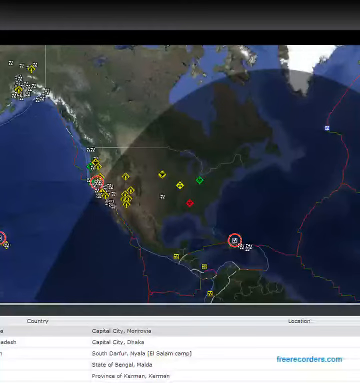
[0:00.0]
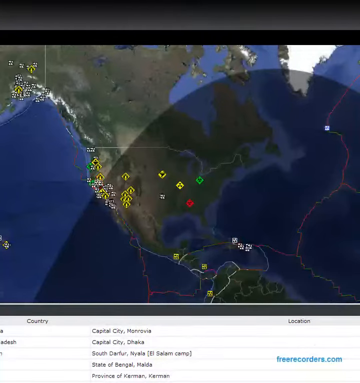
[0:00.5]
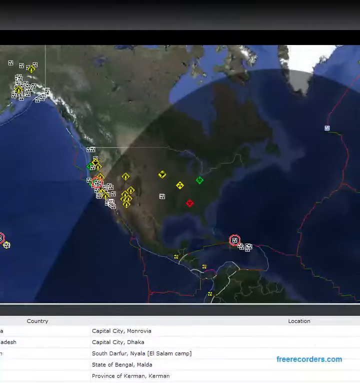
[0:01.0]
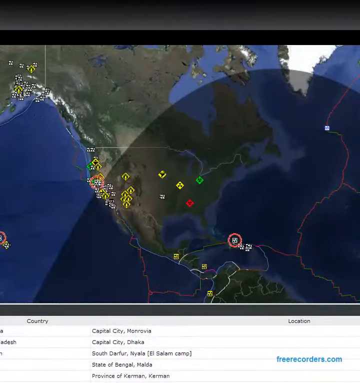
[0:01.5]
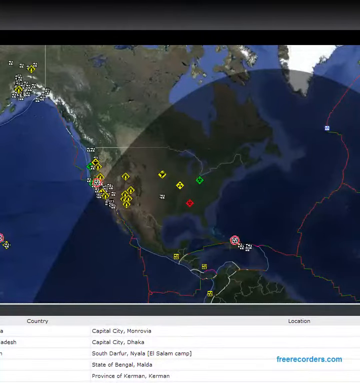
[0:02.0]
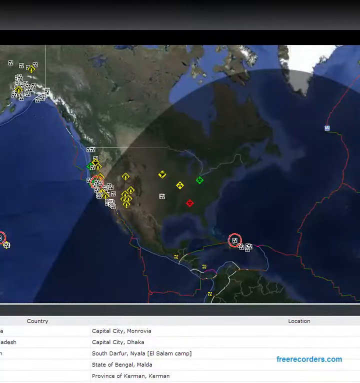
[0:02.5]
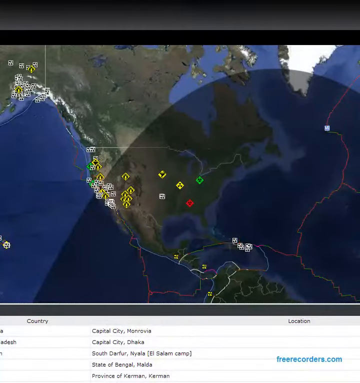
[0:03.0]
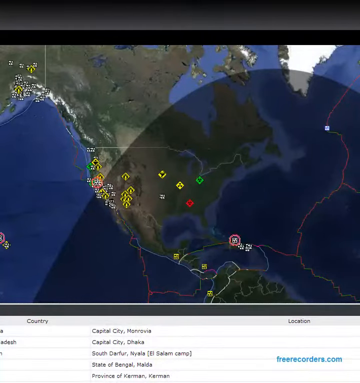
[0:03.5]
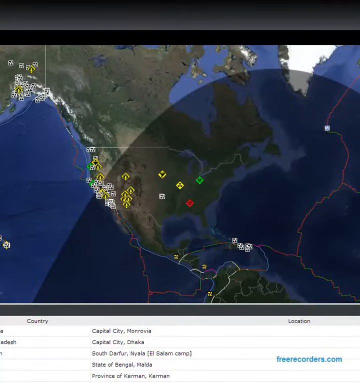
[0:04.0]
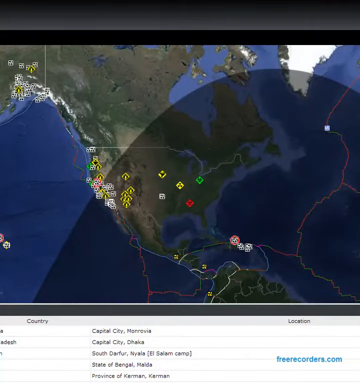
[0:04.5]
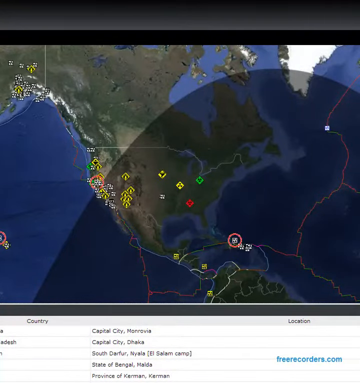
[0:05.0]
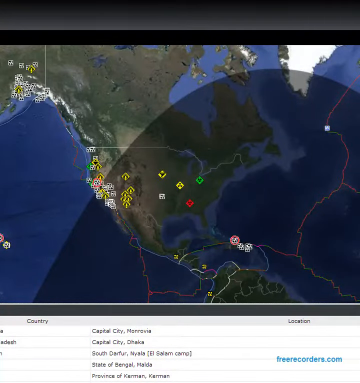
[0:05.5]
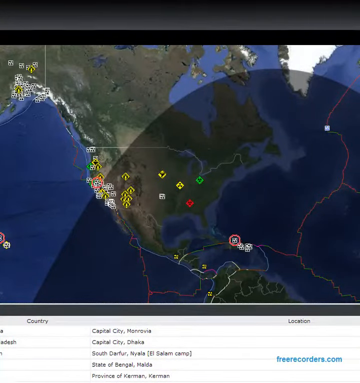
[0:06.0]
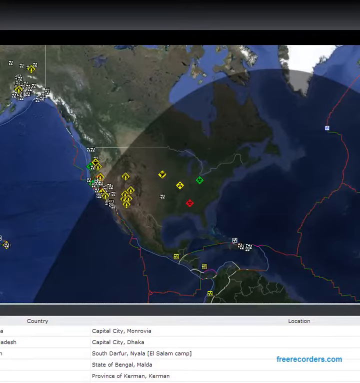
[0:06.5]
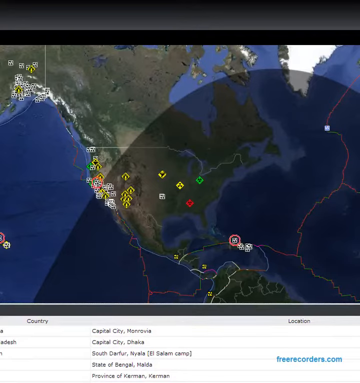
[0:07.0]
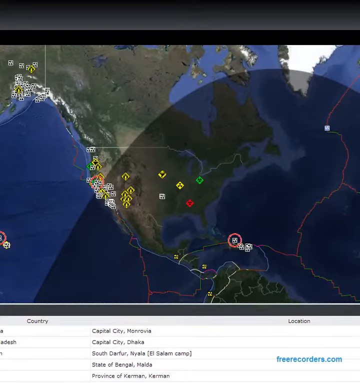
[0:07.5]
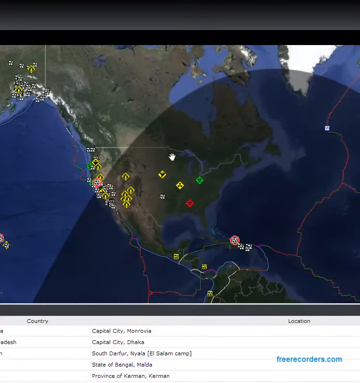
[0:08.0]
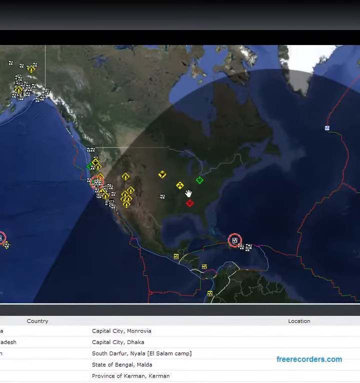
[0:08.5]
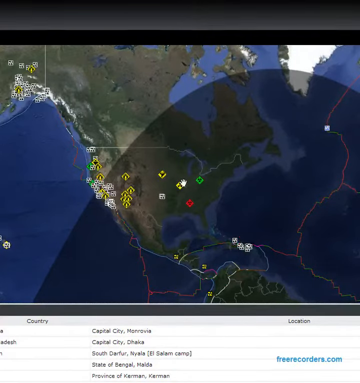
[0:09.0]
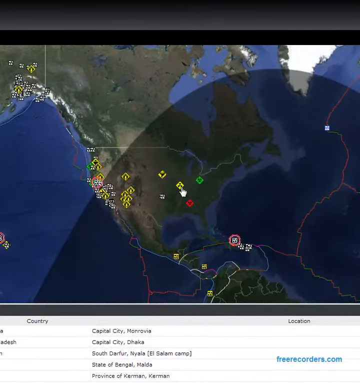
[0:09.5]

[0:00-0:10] A radar from a satellite shows the continent of North America. Lines in the ocean separate some spaces, and there are points on the map: a yellow one in the center, a green one that seems to be for a city in Alabama, and a lot of yellow spots at the western point of the USA. These points have circle alarms, with a circle alarm on Hawaii, one at the northern point of California, and one at the northern part of Cuba.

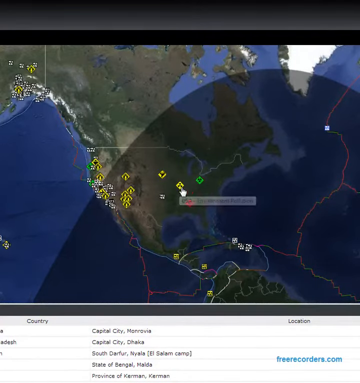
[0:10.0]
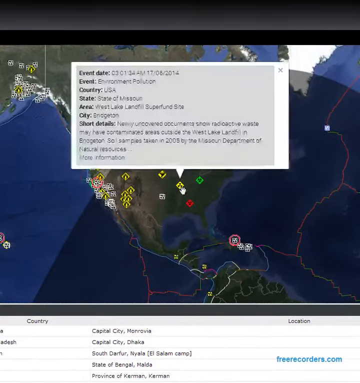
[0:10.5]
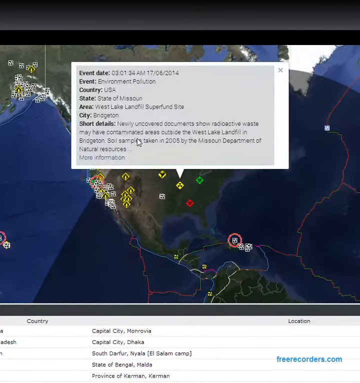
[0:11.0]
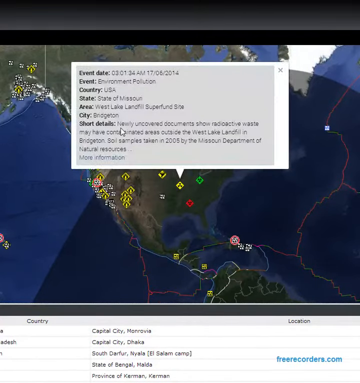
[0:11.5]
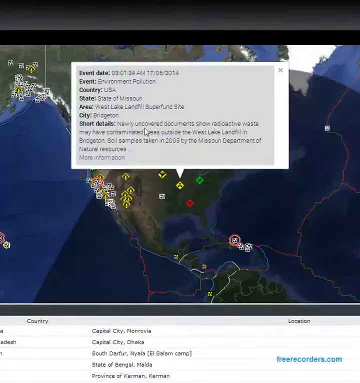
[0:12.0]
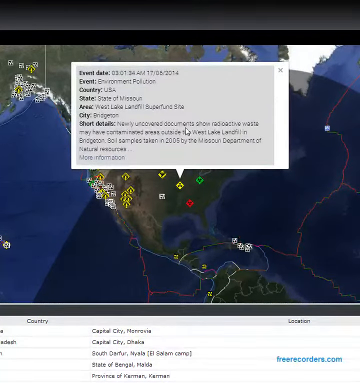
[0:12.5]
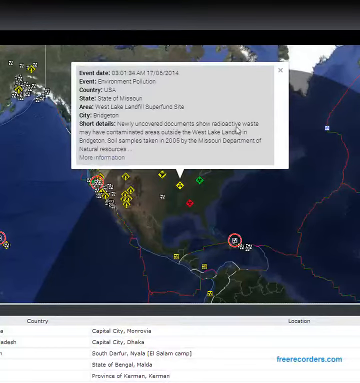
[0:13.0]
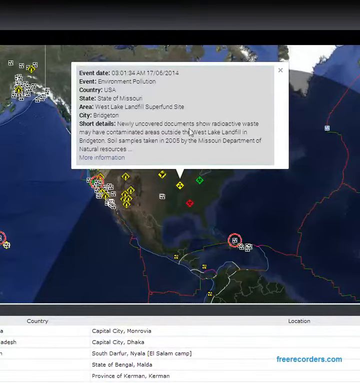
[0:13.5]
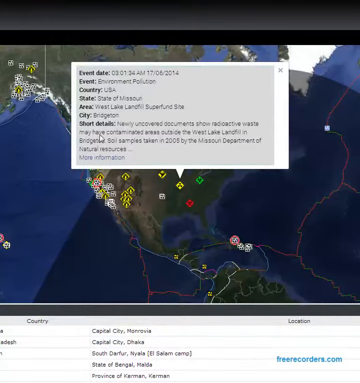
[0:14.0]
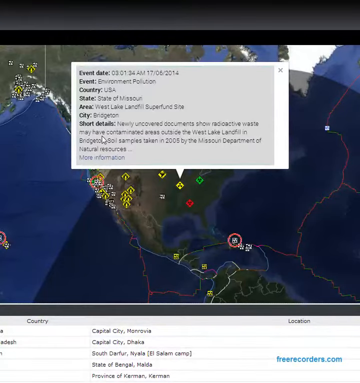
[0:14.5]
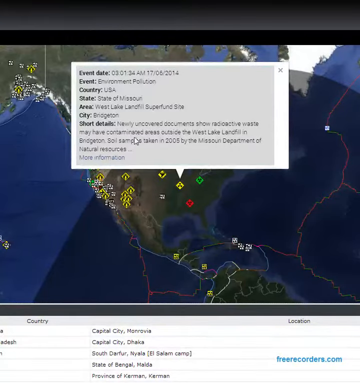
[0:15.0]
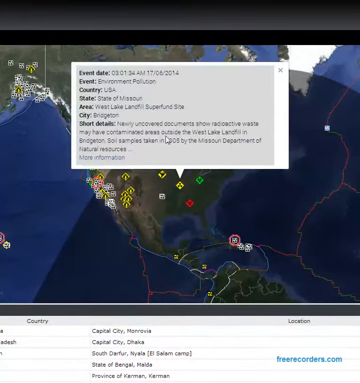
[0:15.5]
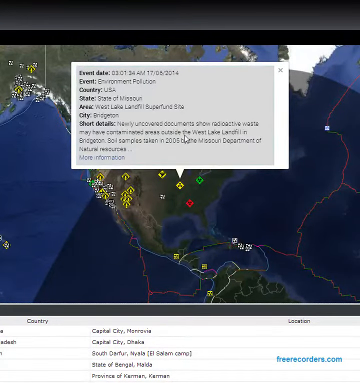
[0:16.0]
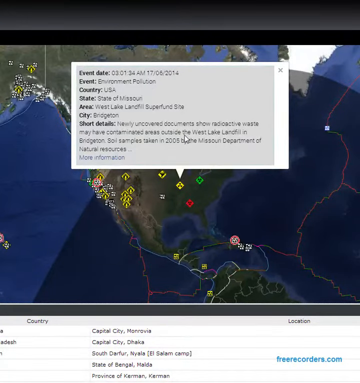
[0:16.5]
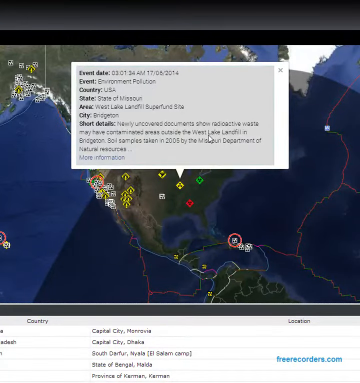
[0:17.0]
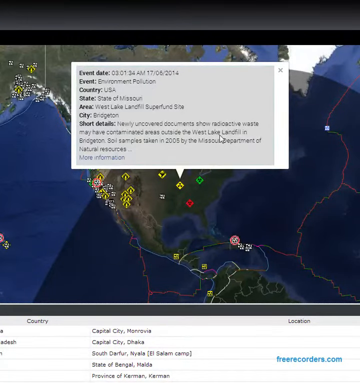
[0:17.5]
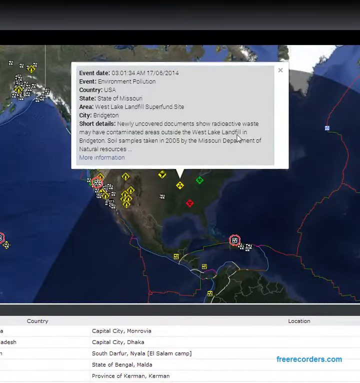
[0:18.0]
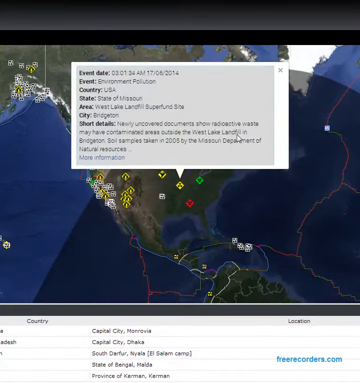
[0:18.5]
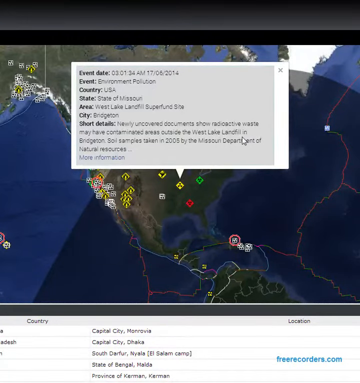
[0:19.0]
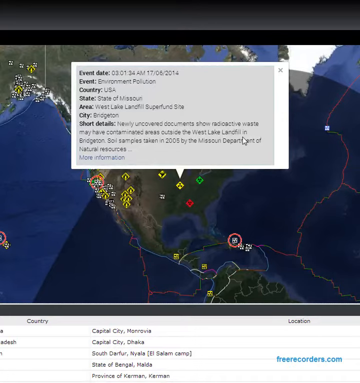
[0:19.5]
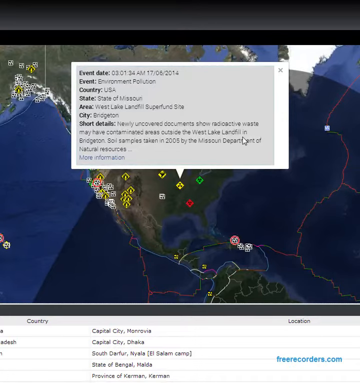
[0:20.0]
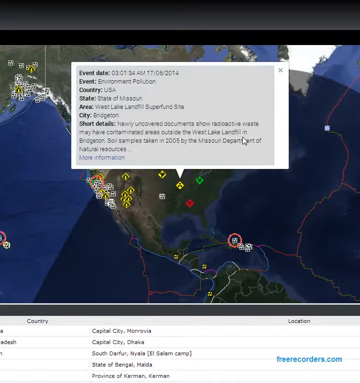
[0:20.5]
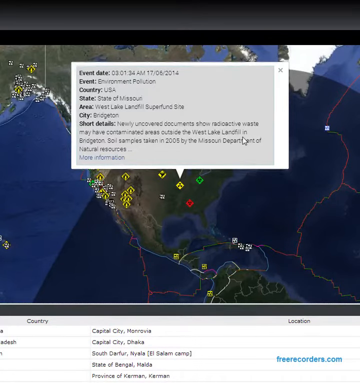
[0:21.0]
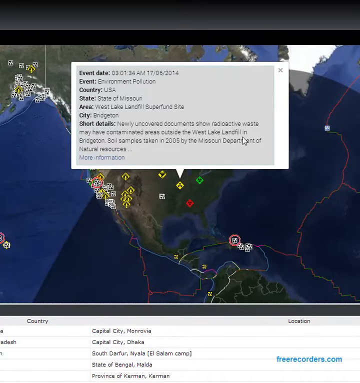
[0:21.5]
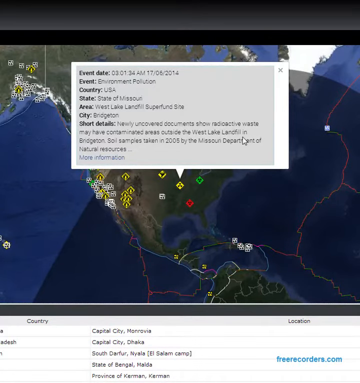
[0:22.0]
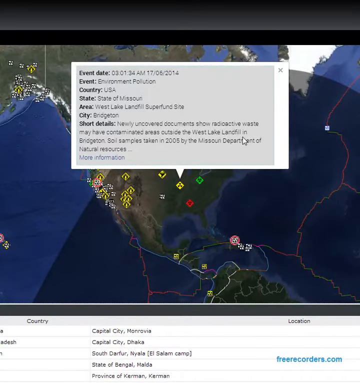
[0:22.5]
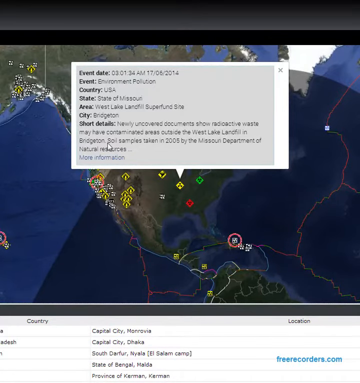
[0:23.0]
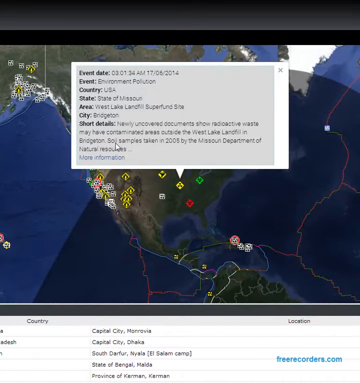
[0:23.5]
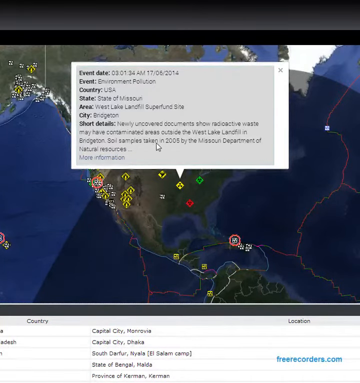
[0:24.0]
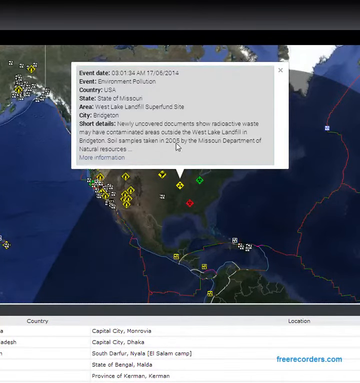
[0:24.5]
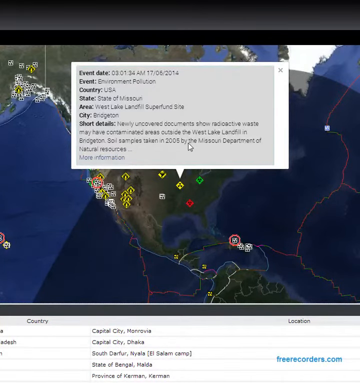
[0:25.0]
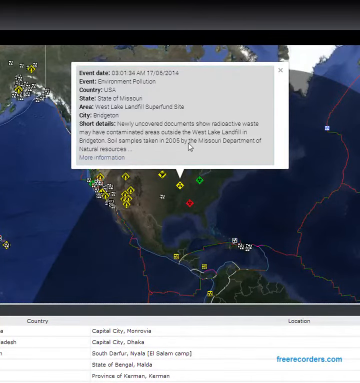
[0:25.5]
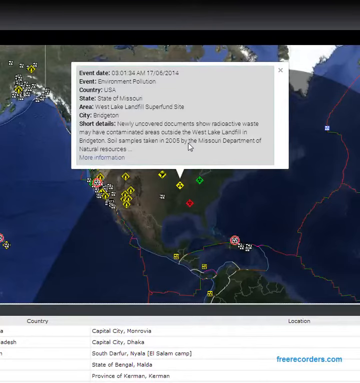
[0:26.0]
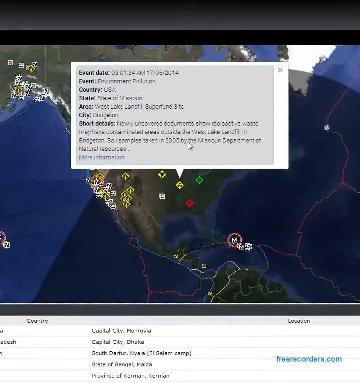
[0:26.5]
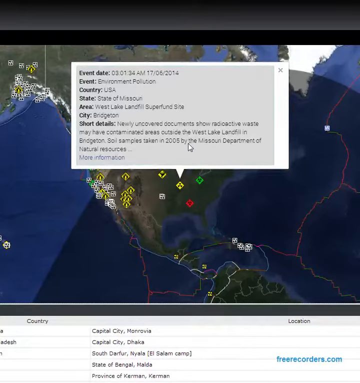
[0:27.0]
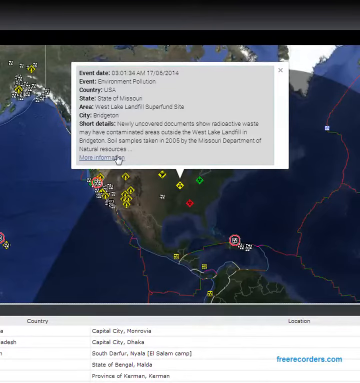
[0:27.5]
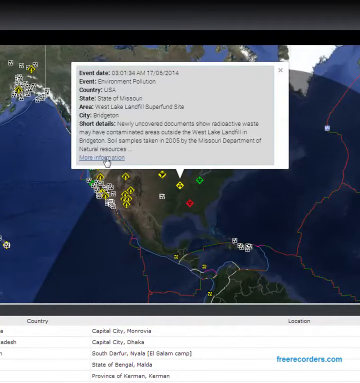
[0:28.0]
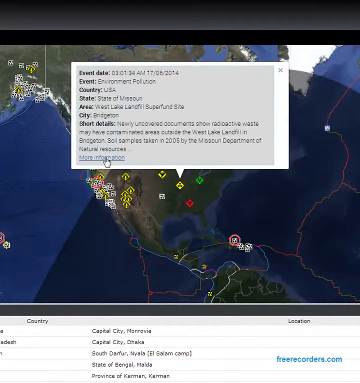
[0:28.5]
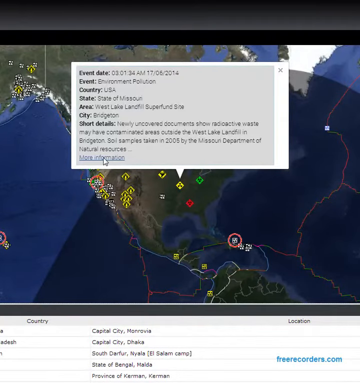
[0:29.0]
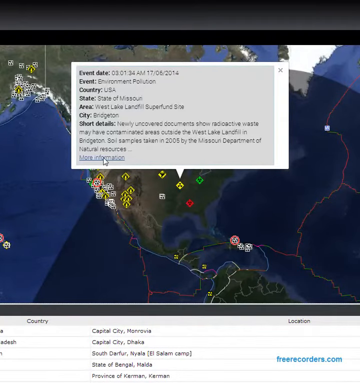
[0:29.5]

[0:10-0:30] A map of the USA shows yellow, green and red squares. Alerts come from circles at Cuba, the western USA and Hawaii, and there are lines in the oceans. A man clicks at the center of the US, and the screen reads "event date, event environment pollution, country USA, state of Missouri, area Westlake Landfill". Short details are shown, along with a "More Information" option to click. Below that are a county location, a capital city, a city, South Dakota and other items. The man stays on this page. There are a lot of white squares, which sometimes pulse like a heart.